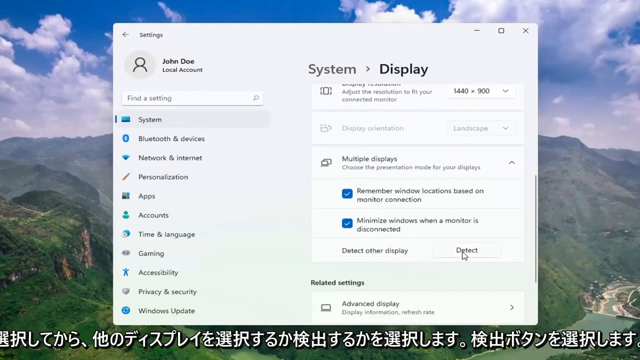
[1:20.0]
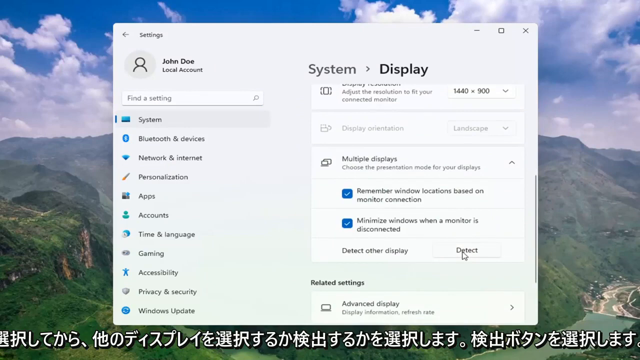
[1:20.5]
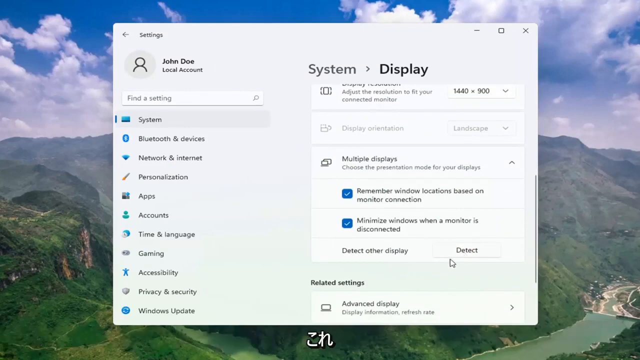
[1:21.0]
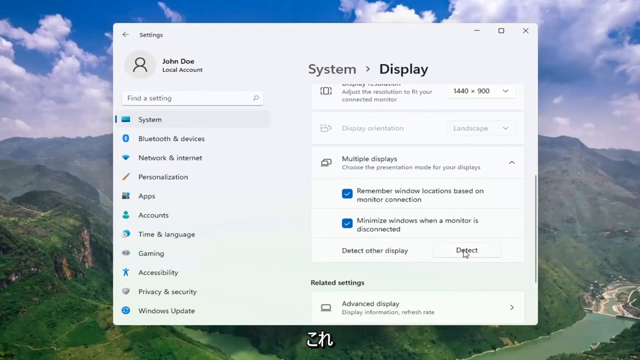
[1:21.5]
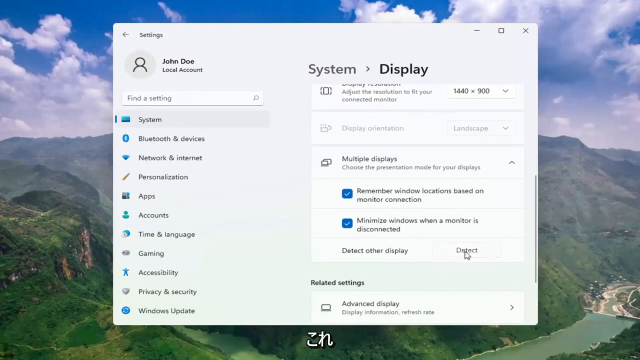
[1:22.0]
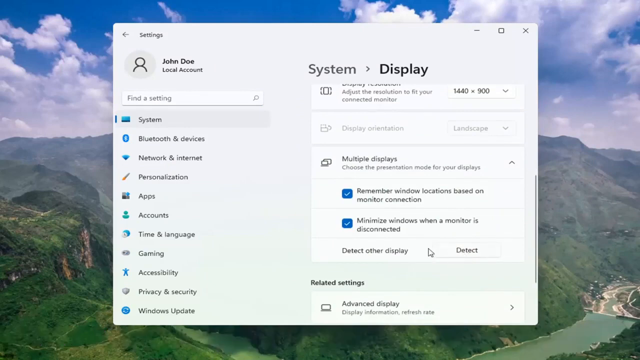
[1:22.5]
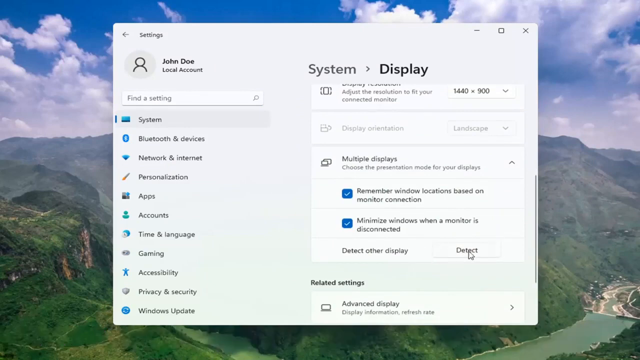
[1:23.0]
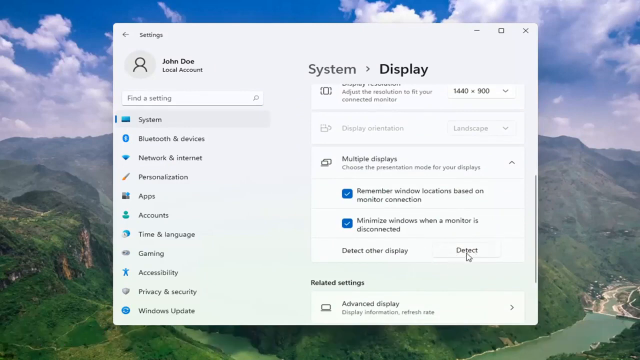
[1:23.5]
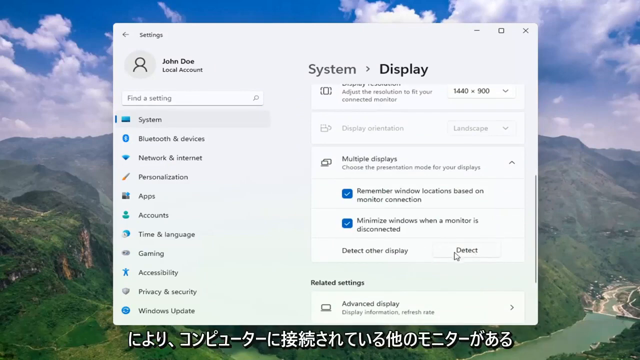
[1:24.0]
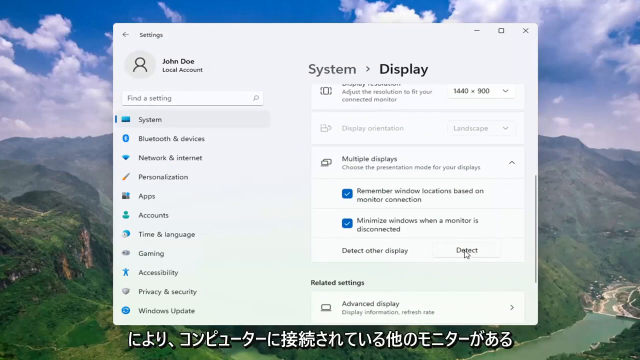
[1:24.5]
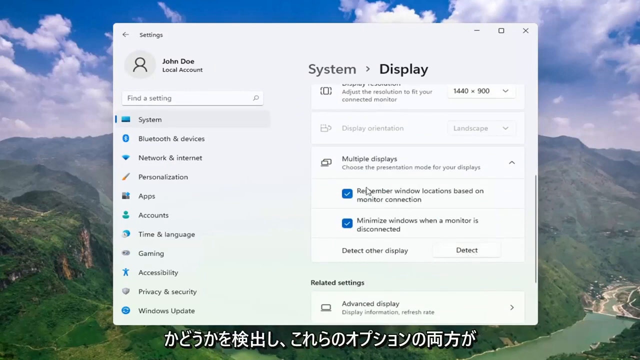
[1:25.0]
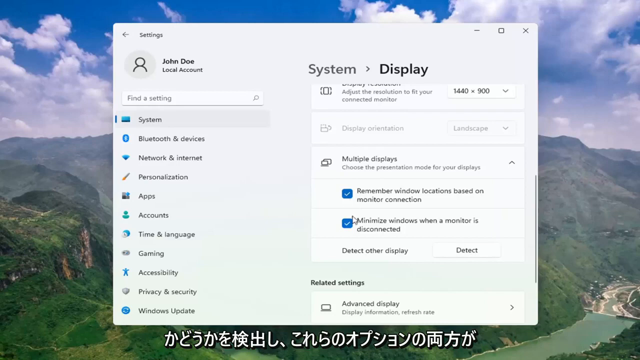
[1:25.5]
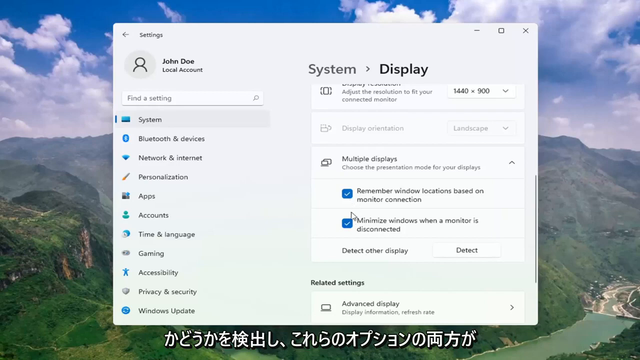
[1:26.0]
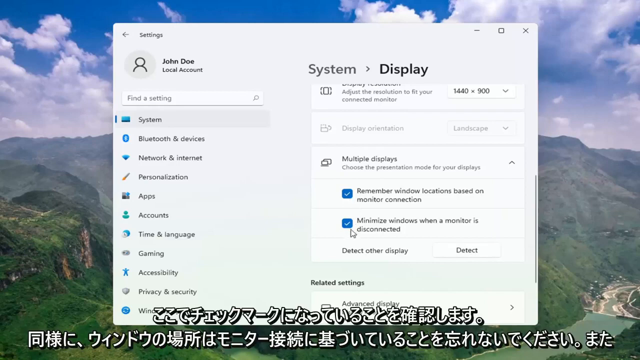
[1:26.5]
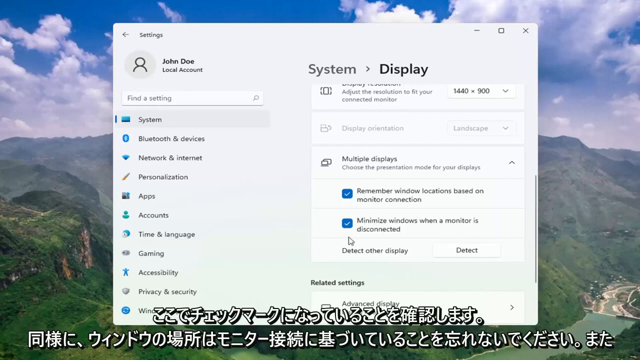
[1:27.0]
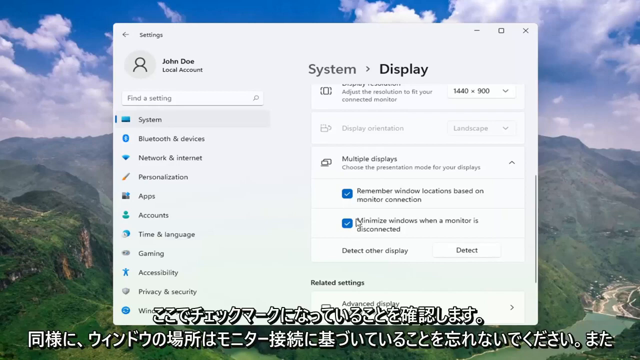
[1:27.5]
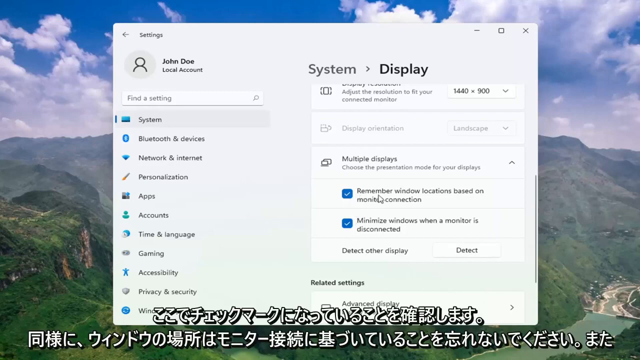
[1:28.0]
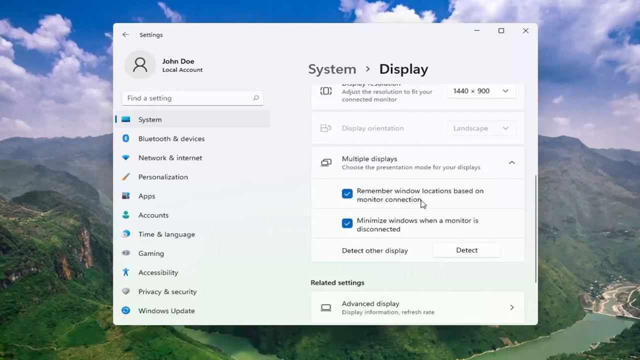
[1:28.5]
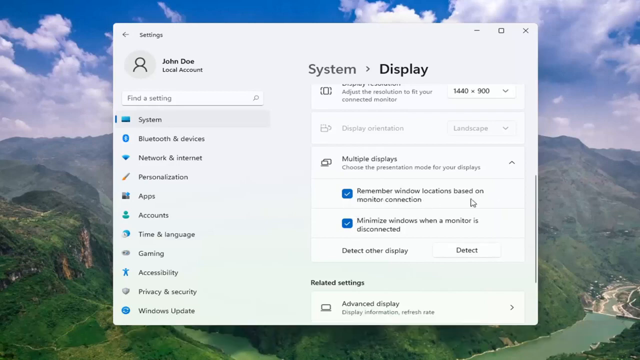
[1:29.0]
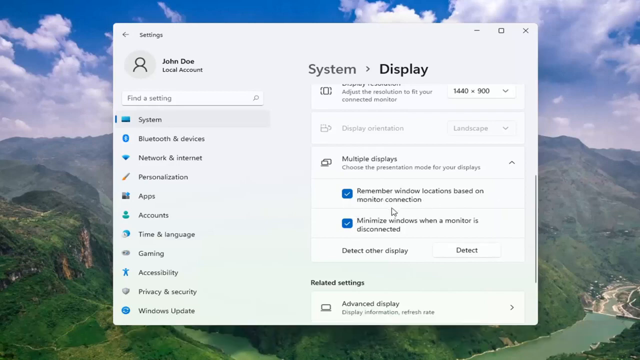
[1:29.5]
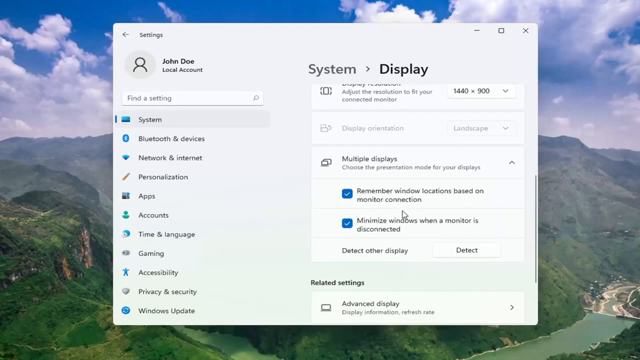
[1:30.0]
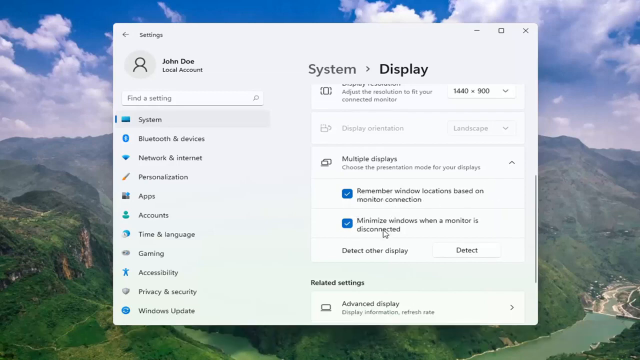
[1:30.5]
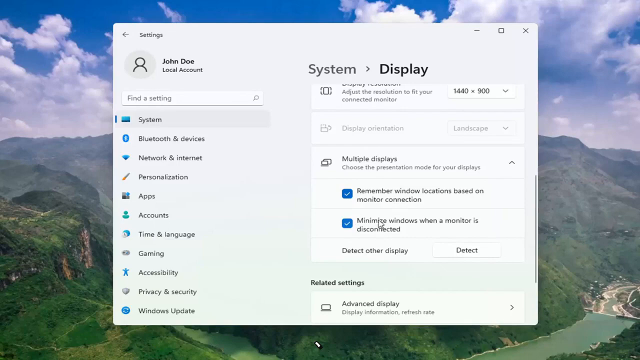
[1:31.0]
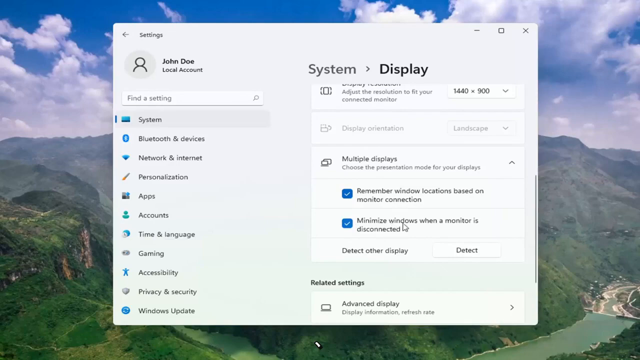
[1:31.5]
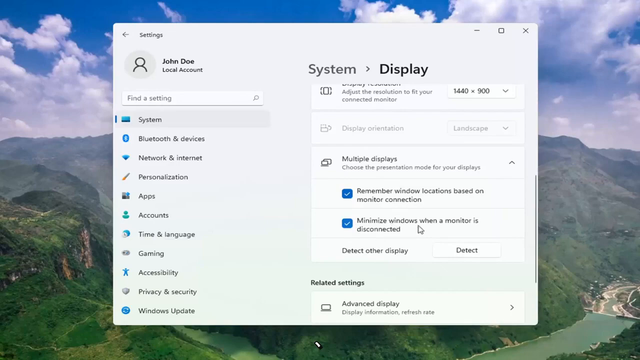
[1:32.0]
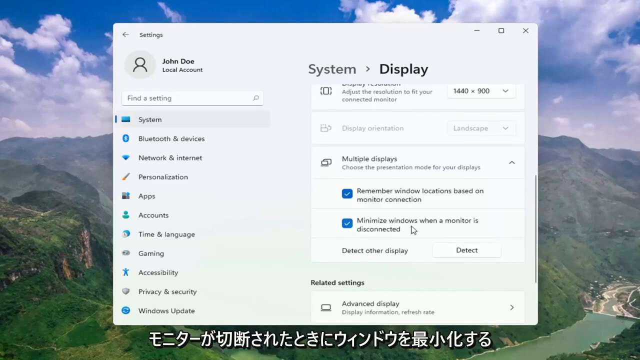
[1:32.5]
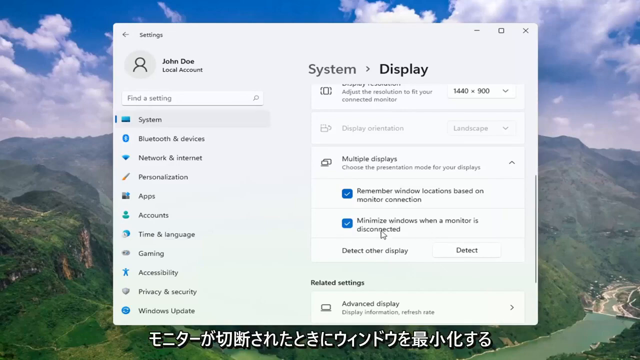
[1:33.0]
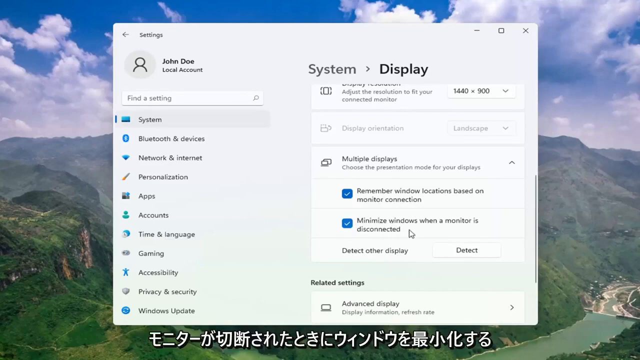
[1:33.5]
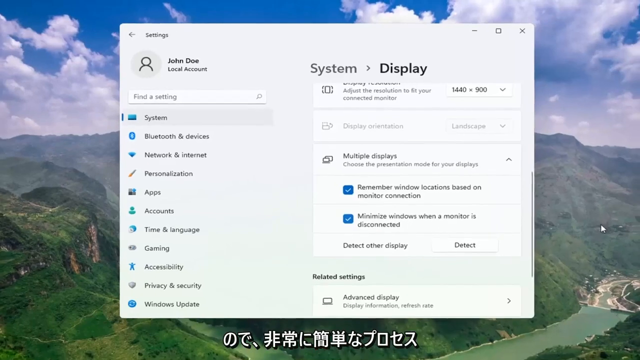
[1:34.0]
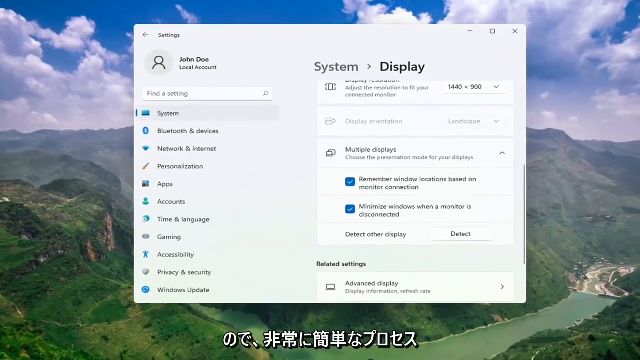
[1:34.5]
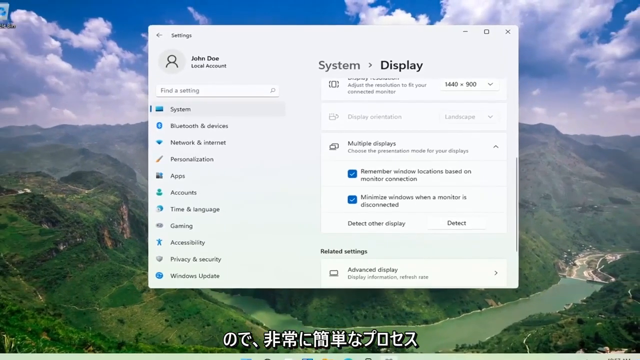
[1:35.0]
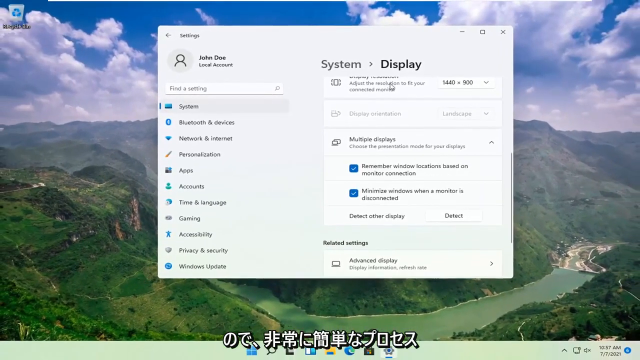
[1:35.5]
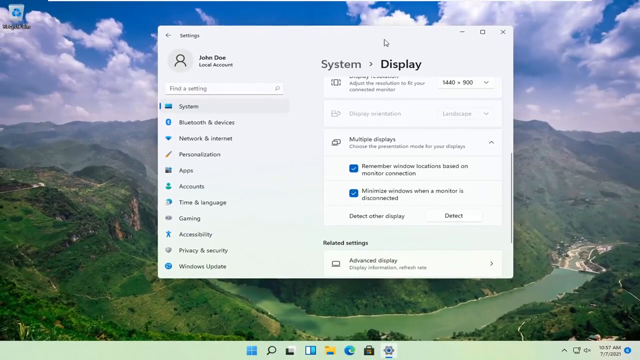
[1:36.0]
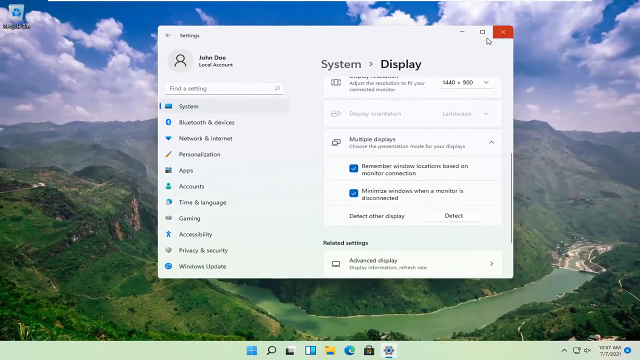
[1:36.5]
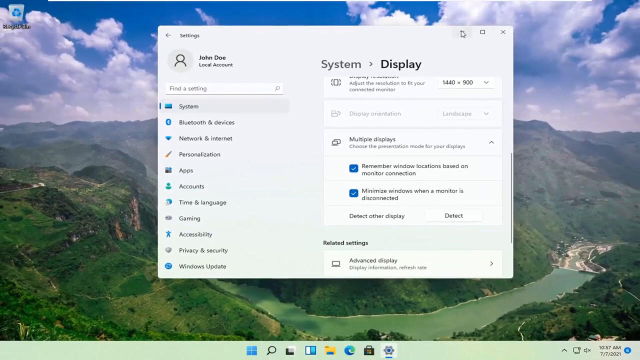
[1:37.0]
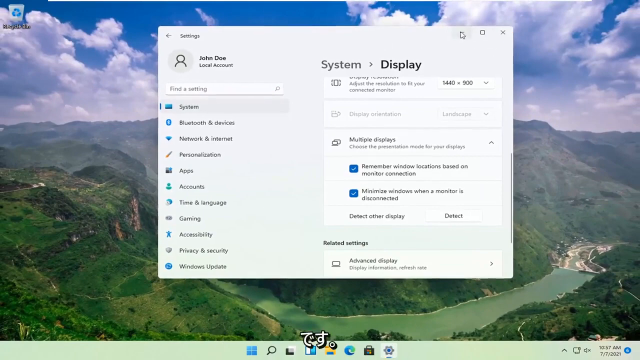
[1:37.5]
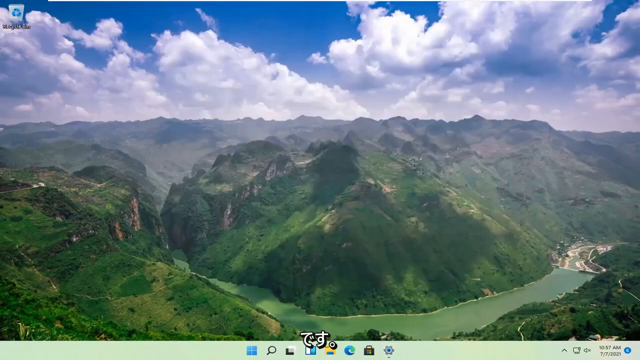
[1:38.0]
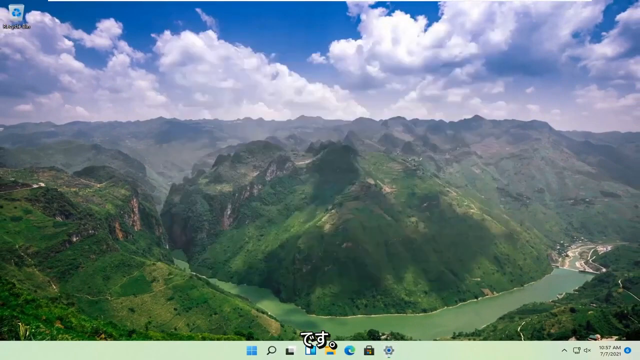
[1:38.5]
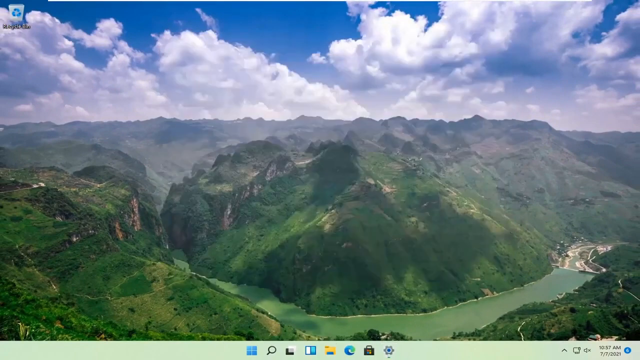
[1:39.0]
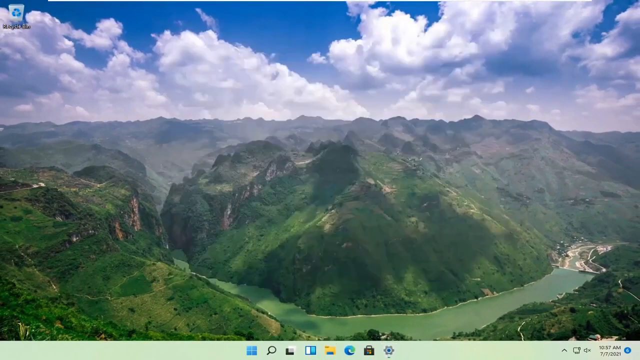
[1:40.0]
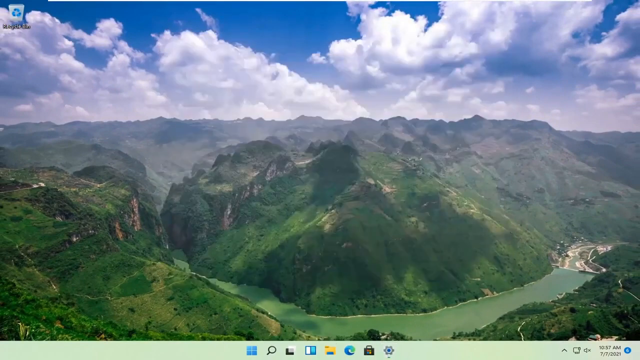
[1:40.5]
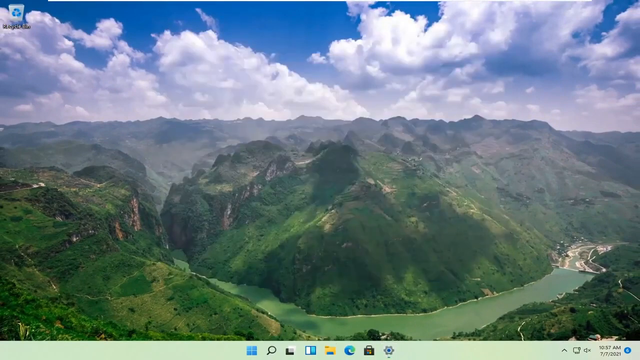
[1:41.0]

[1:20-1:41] The same pop-up box is over the background picture. At the top is the settings option with an arrow to go back. In the top right-hand corner of the pop-up box are a minus sign to minimize, a box to maximize, and an X to close the pop-up. The cursor hovers between two of the multiple display options, appearing to show what they can do. The cursor then goes up to minimize the page, and it goes off the screen. Much of the background picture of the mountains, sky and clouds is still visible. On the left, the different options under settings are shown, along with a search bar that says "find a setting" with a small magnifying glass icon inside it.